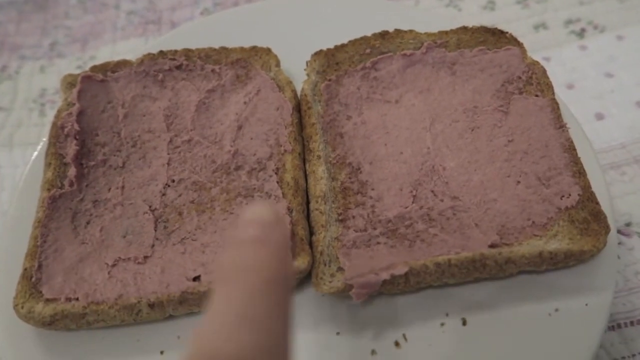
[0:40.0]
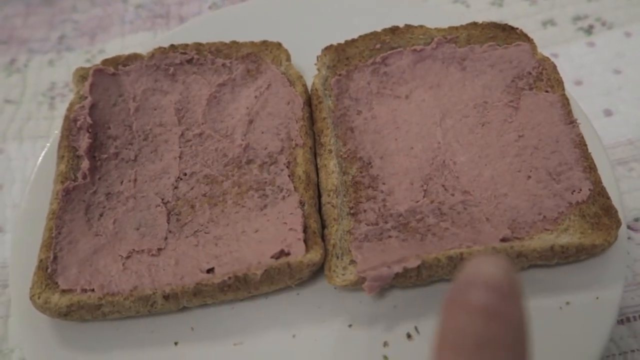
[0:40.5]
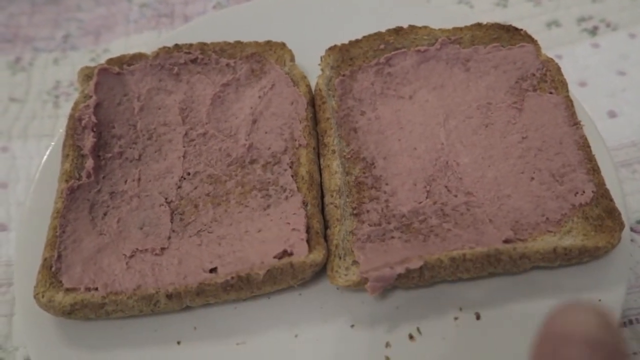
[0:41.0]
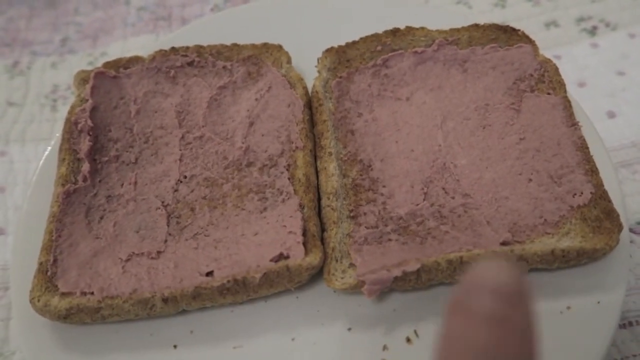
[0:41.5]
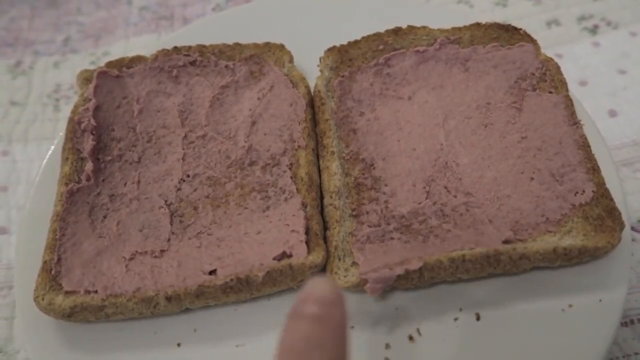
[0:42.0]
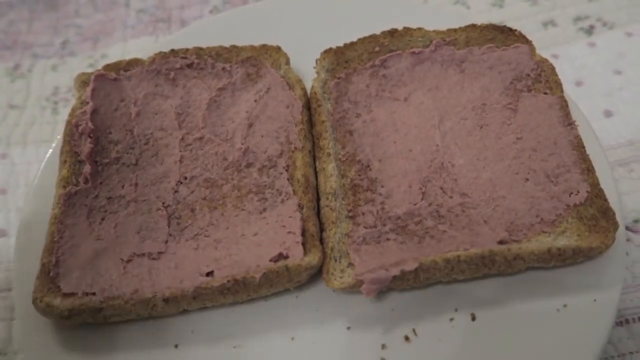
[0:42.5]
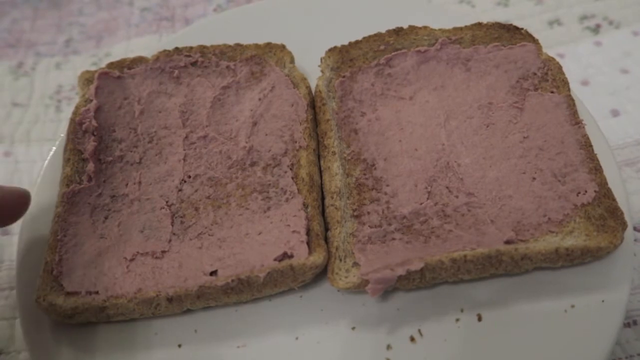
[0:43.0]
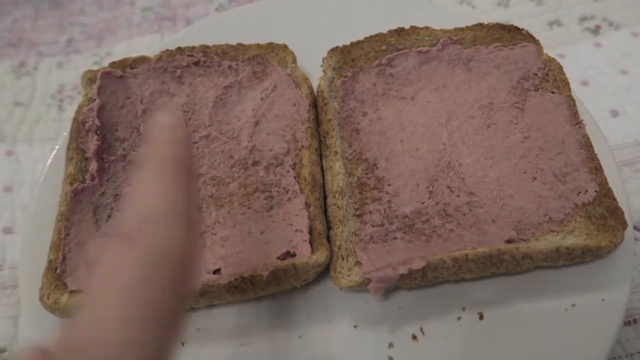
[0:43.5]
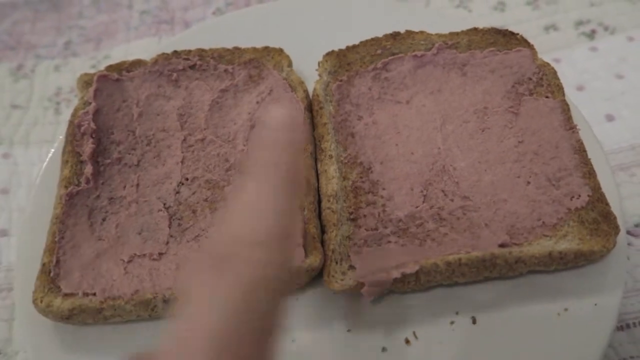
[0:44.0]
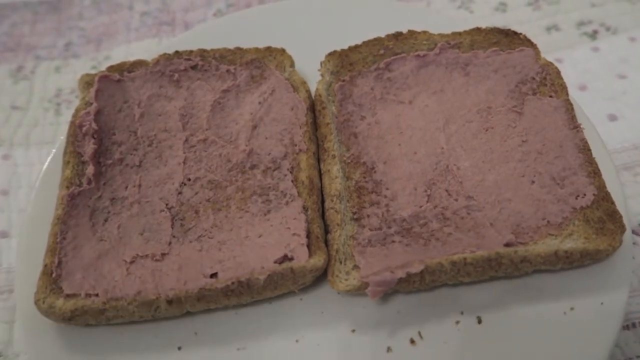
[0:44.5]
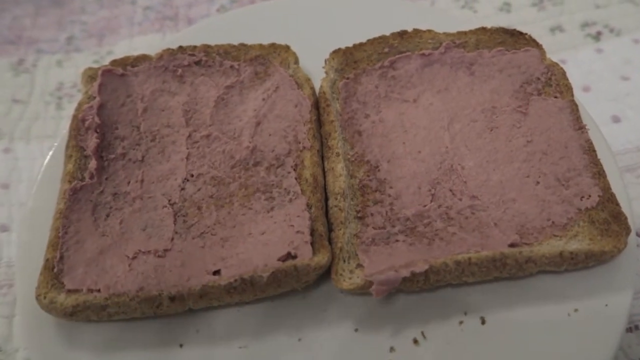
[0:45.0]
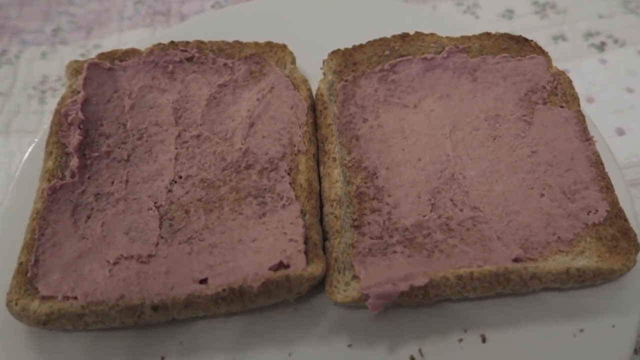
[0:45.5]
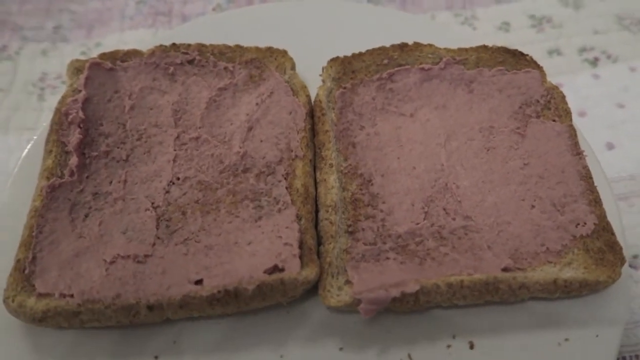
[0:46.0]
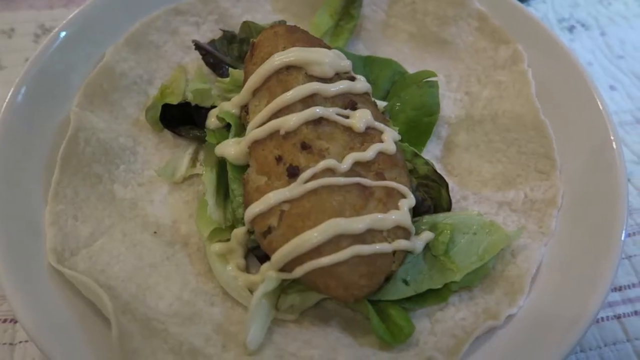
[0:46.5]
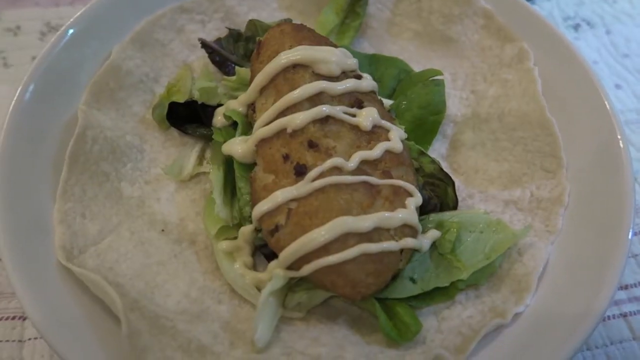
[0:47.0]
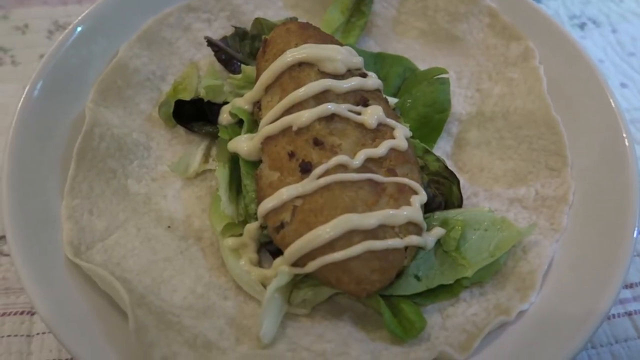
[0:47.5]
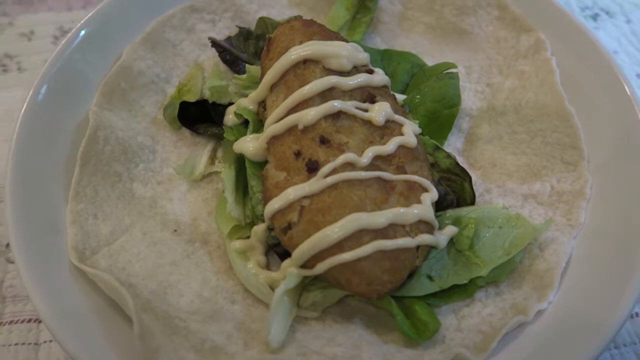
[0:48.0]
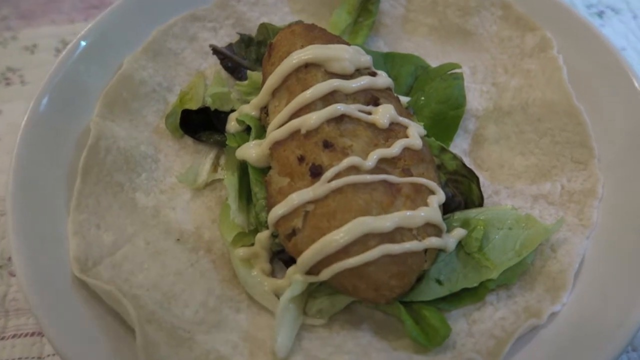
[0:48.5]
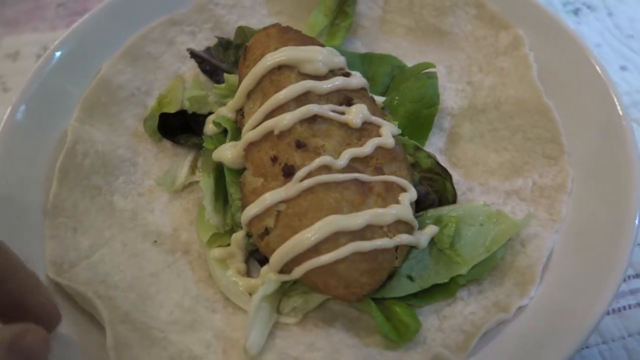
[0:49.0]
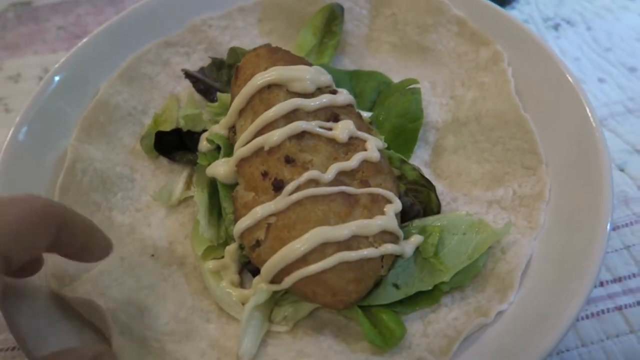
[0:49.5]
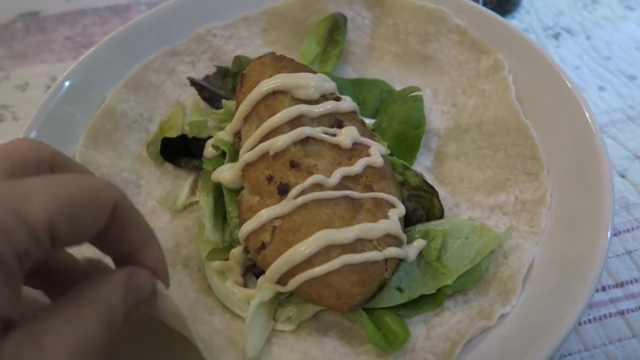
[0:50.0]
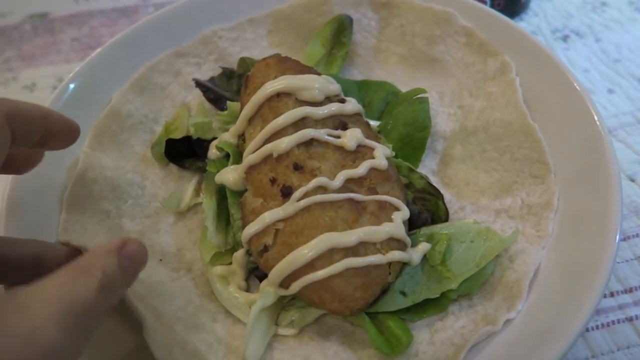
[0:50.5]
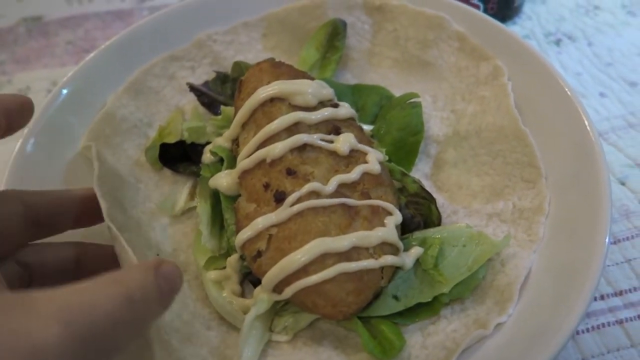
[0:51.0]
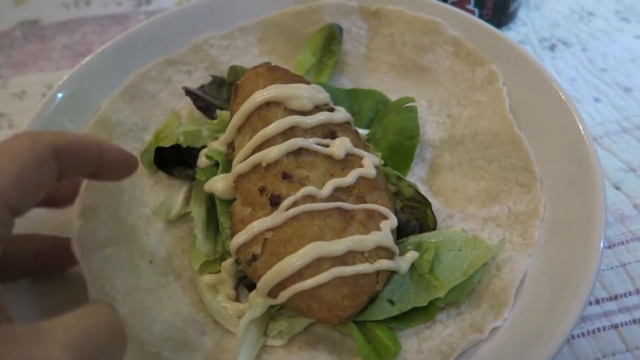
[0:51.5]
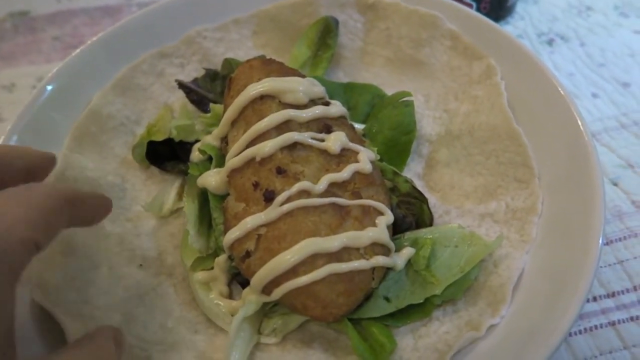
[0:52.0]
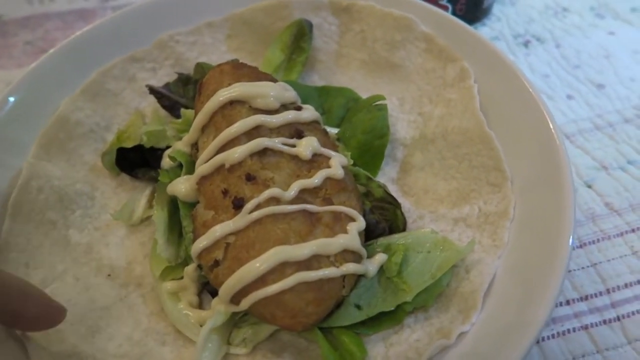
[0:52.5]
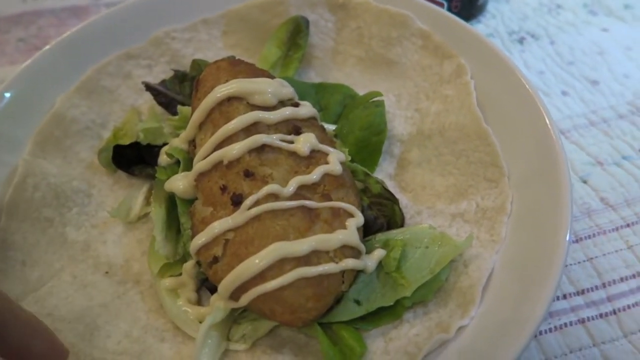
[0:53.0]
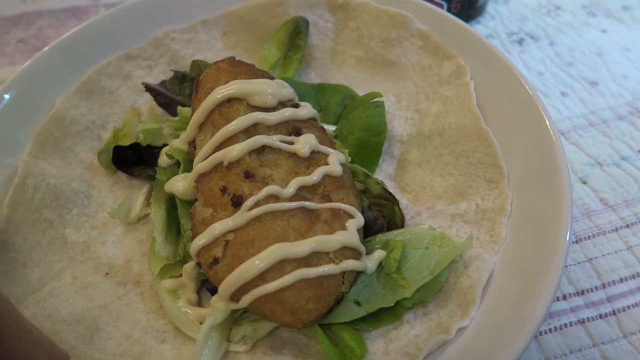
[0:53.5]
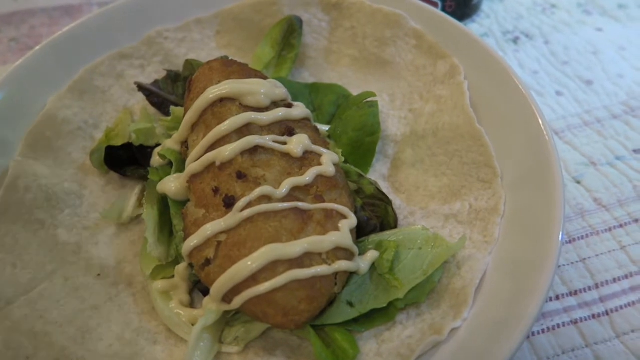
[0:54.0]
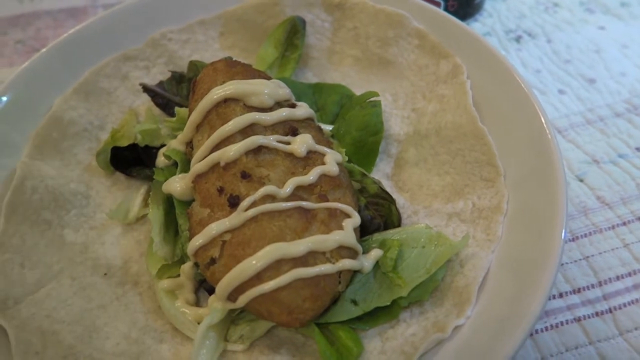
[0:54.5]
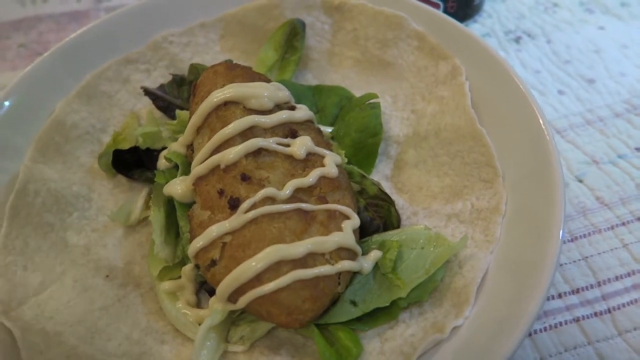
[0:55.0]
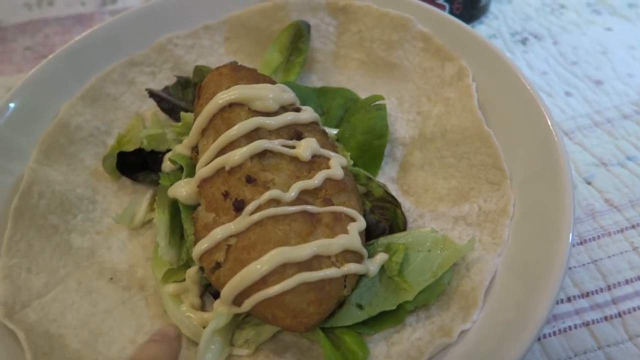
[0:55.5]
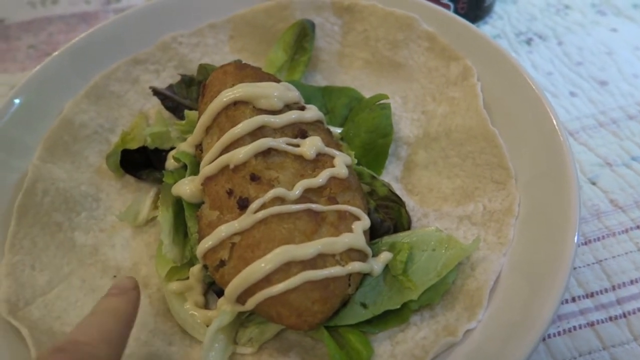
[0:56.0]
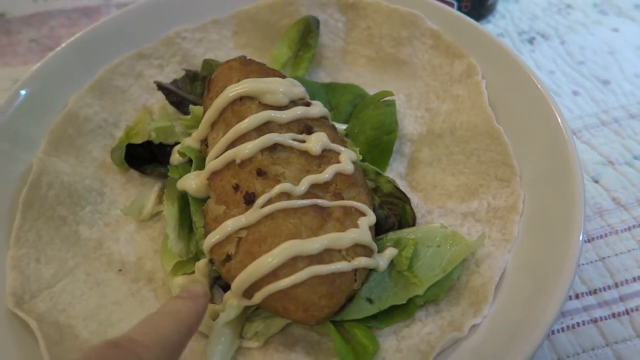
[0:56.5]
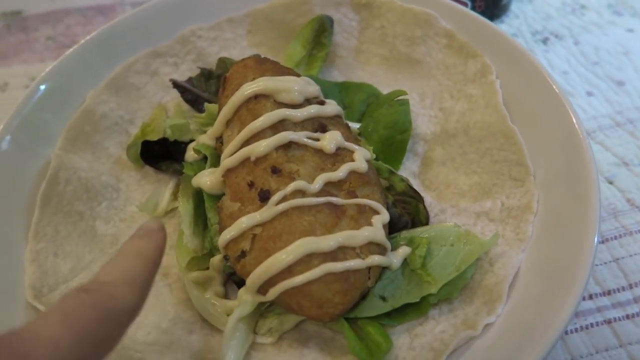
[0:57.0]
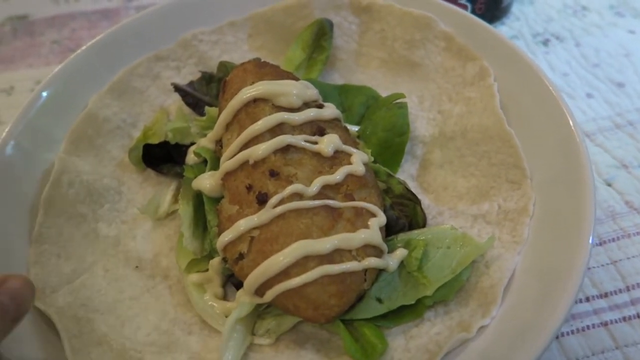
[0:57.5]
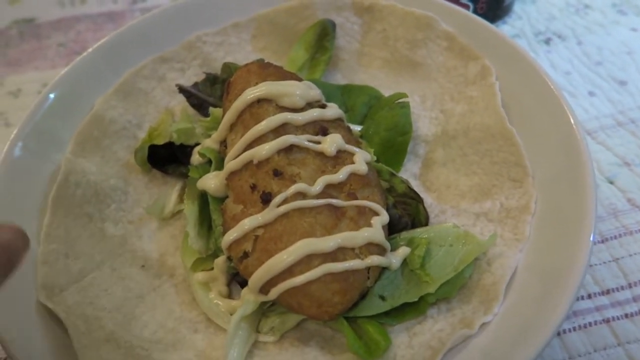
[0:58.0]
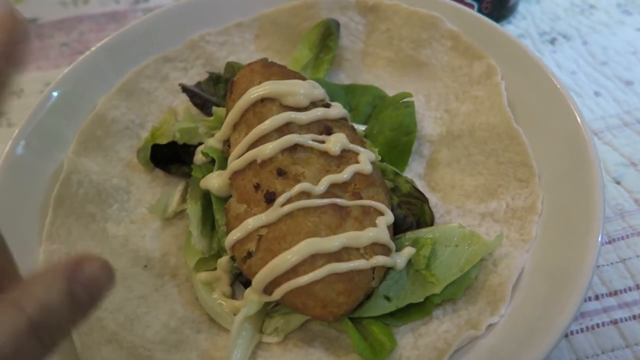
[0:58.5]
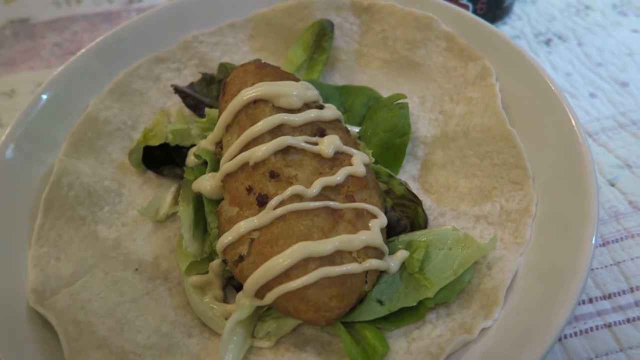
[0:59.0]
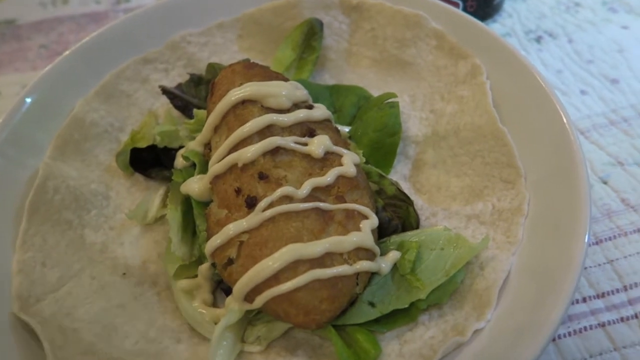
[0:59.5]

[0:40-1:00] Two slices of brown bread have spread on top. Next, a plate holds uncooked roti with a well-cooked chicken breast on top of it. There is lettuce under the chicken breast and mayonnaise squeezed on top of it. As he touches the roti, it shows there is another one underneath the one on top, so it is a double roti.